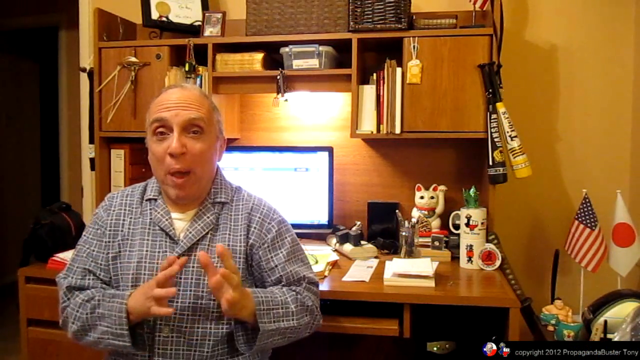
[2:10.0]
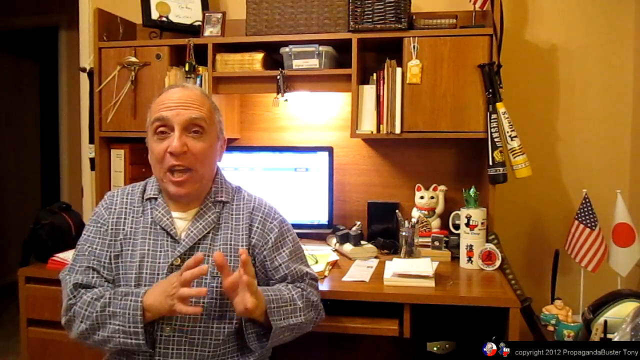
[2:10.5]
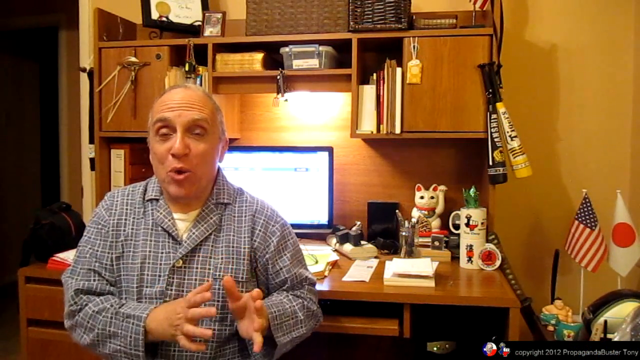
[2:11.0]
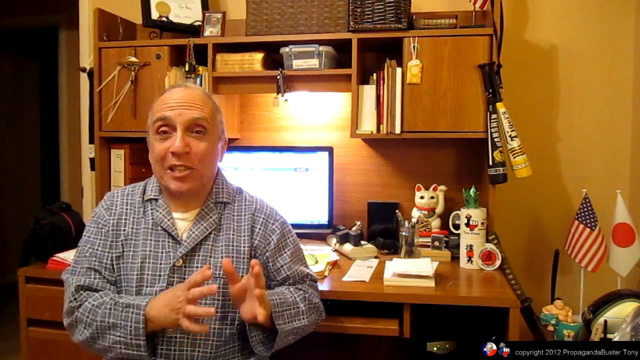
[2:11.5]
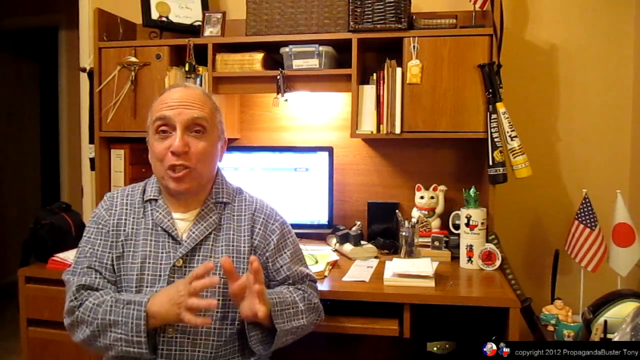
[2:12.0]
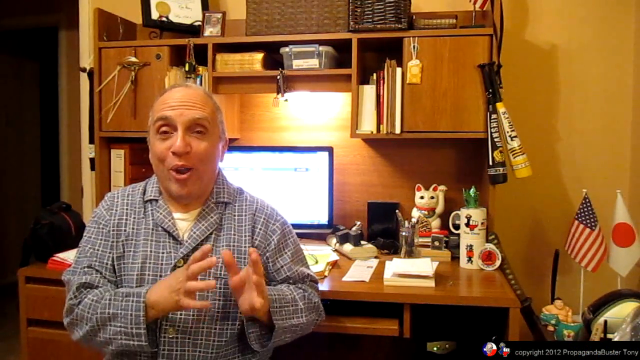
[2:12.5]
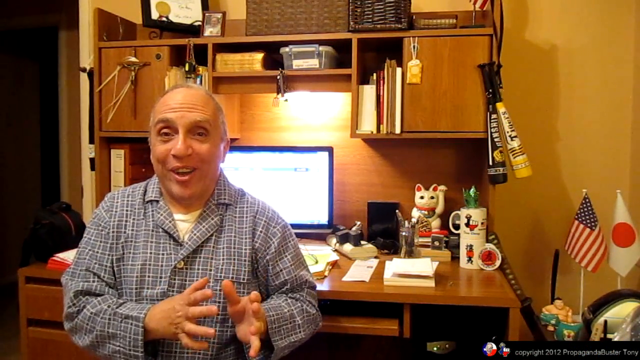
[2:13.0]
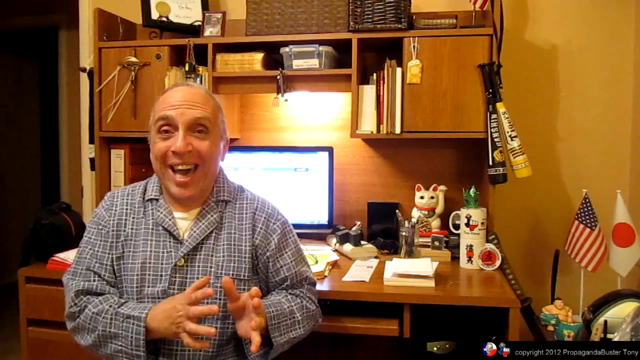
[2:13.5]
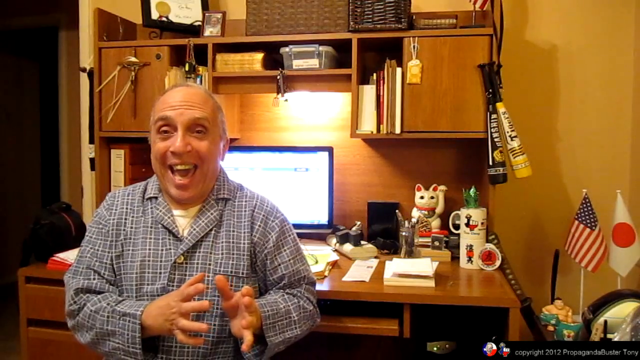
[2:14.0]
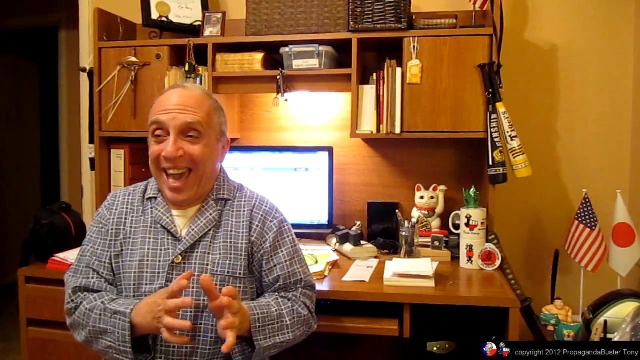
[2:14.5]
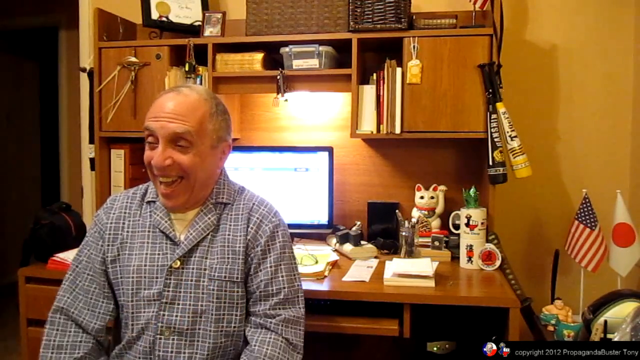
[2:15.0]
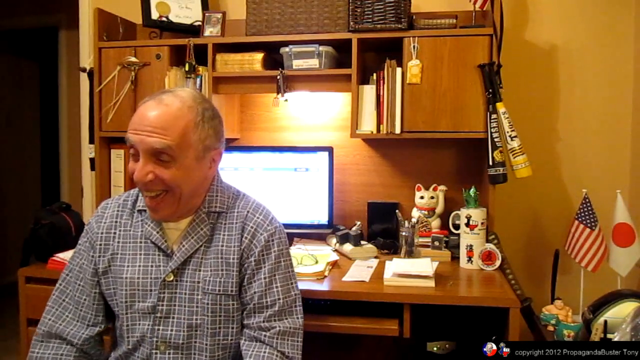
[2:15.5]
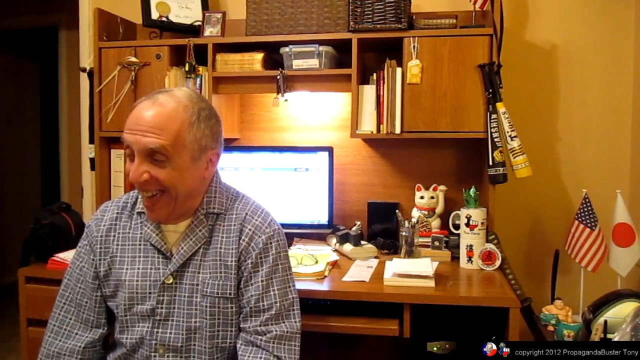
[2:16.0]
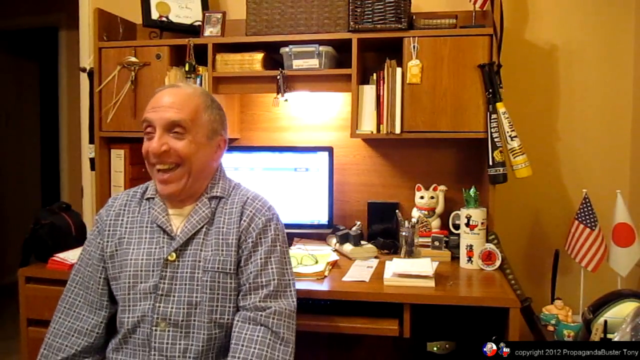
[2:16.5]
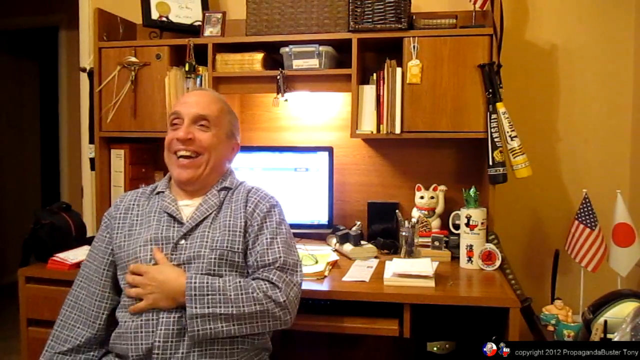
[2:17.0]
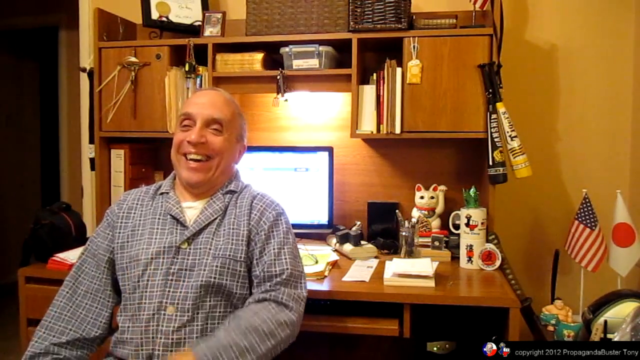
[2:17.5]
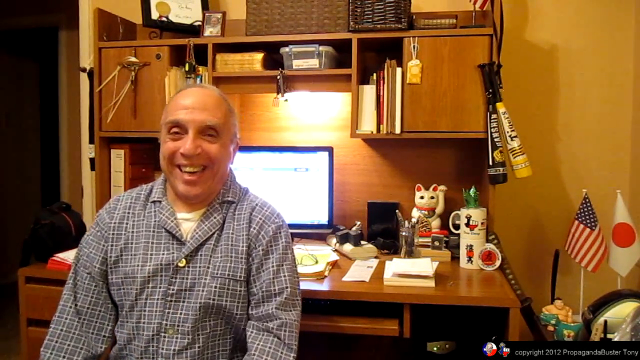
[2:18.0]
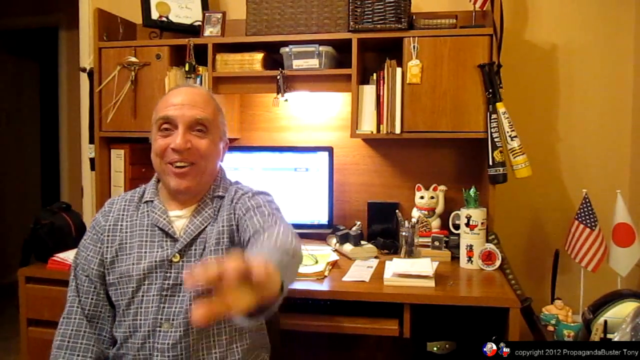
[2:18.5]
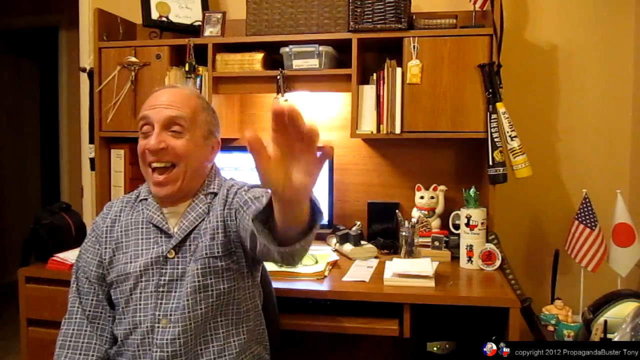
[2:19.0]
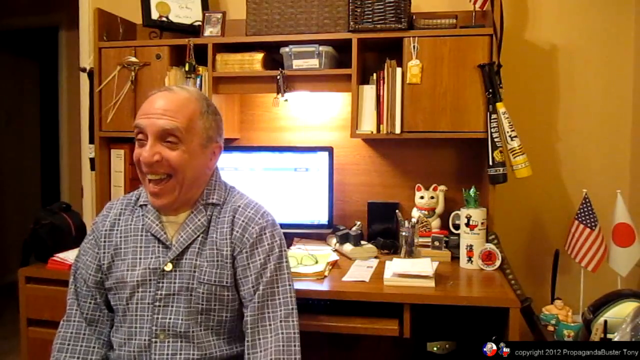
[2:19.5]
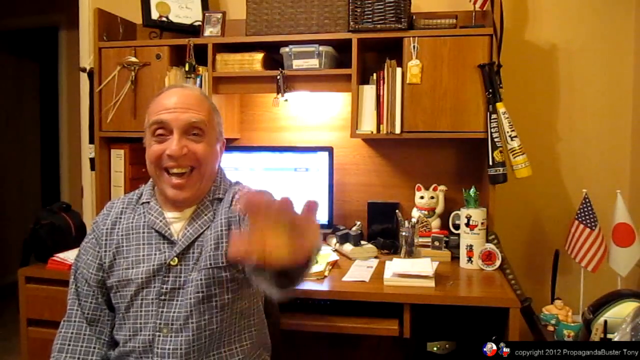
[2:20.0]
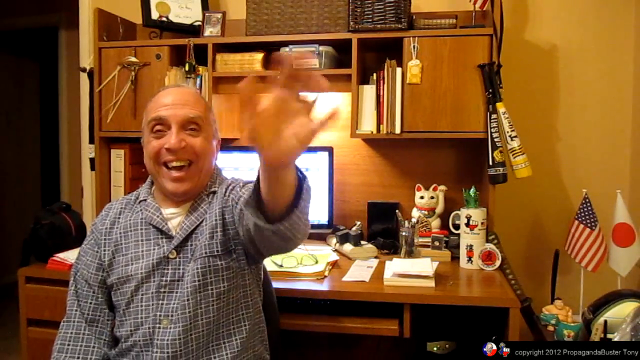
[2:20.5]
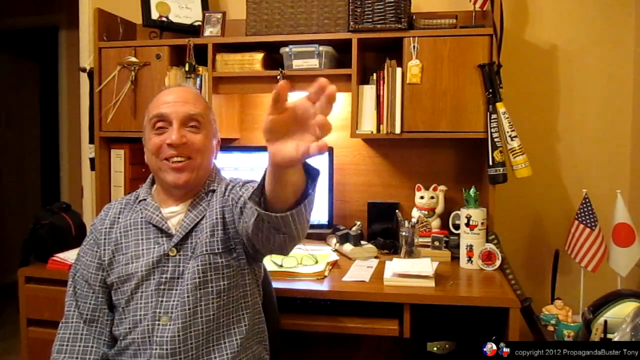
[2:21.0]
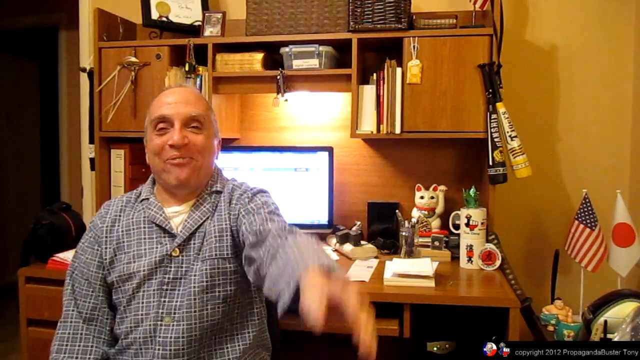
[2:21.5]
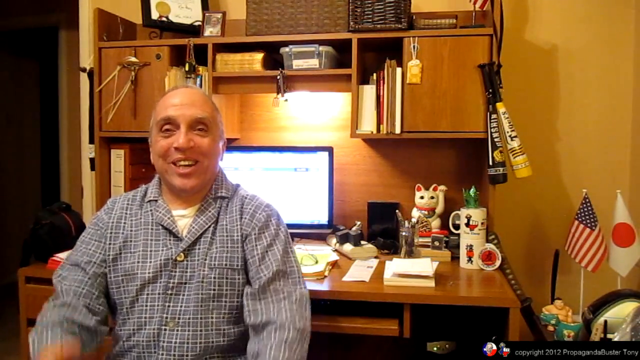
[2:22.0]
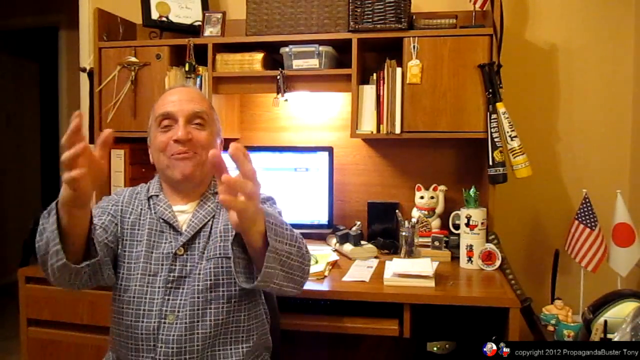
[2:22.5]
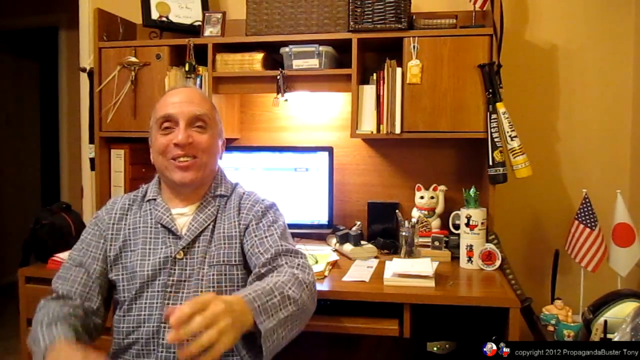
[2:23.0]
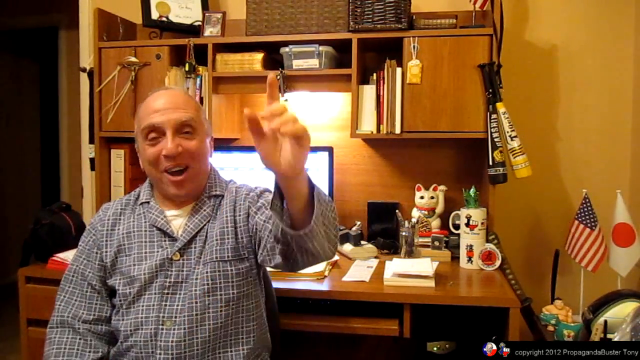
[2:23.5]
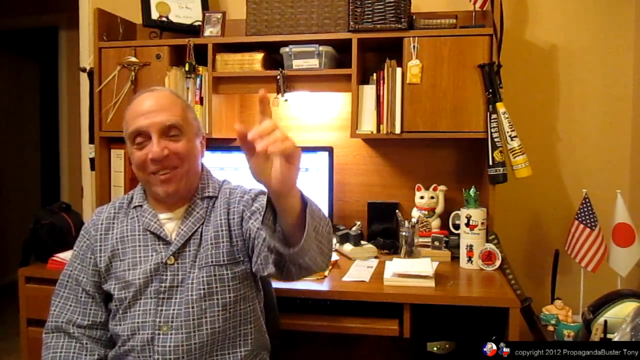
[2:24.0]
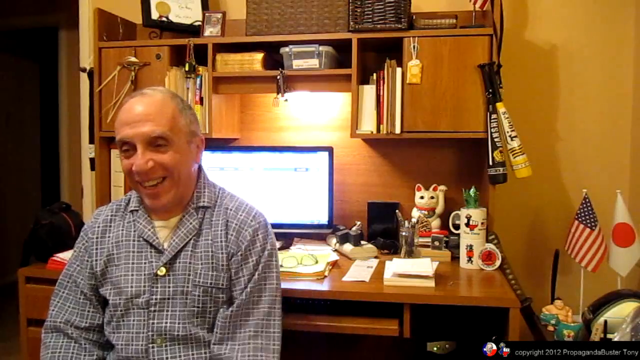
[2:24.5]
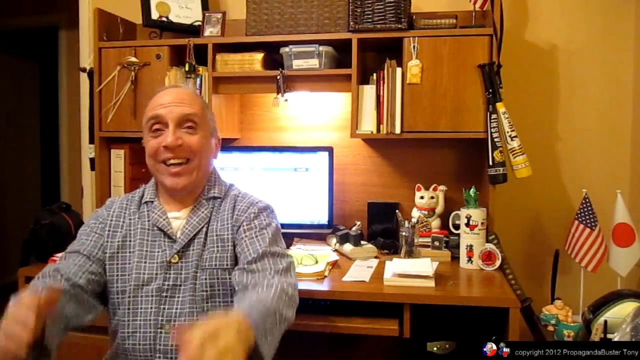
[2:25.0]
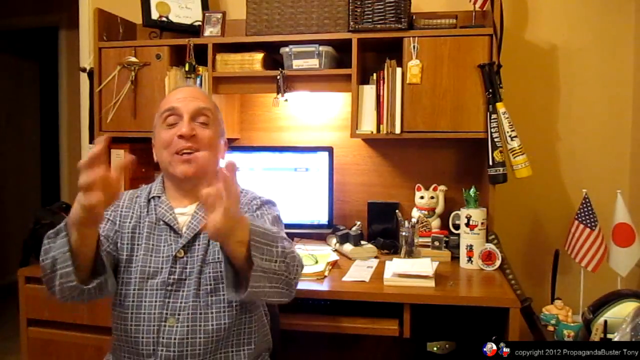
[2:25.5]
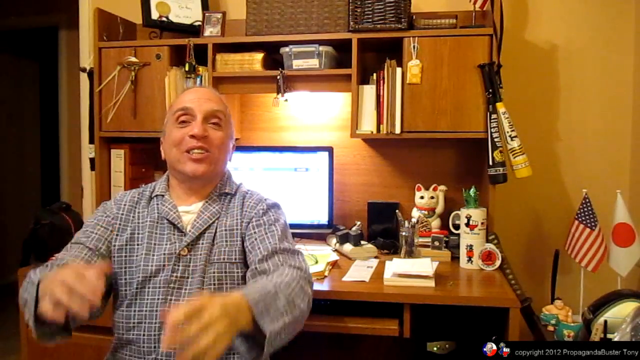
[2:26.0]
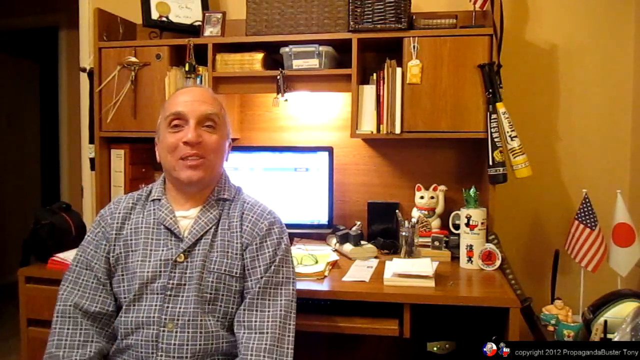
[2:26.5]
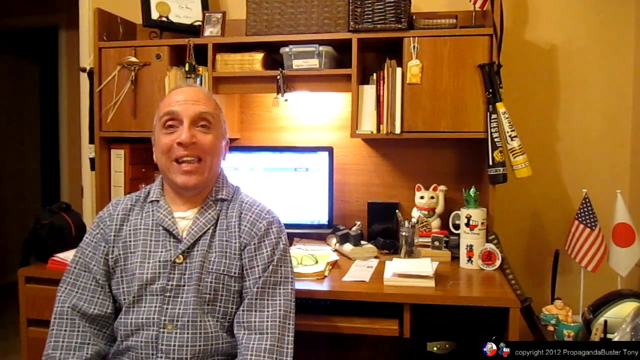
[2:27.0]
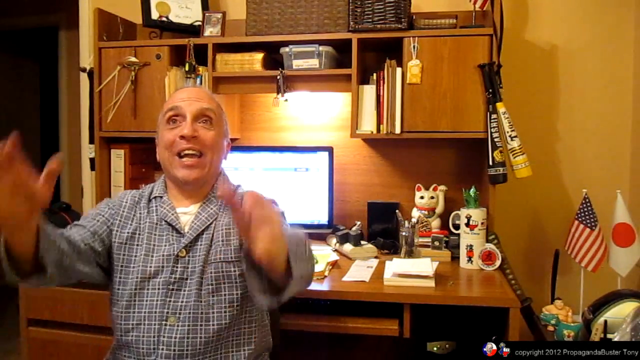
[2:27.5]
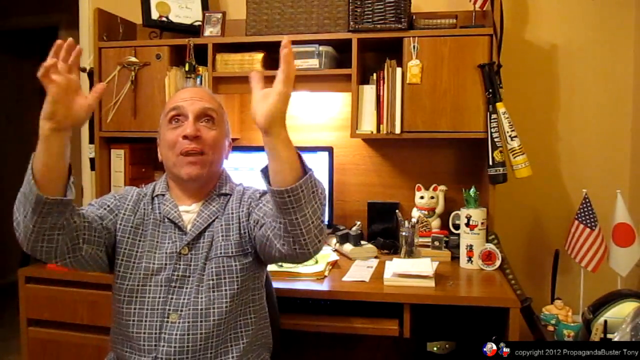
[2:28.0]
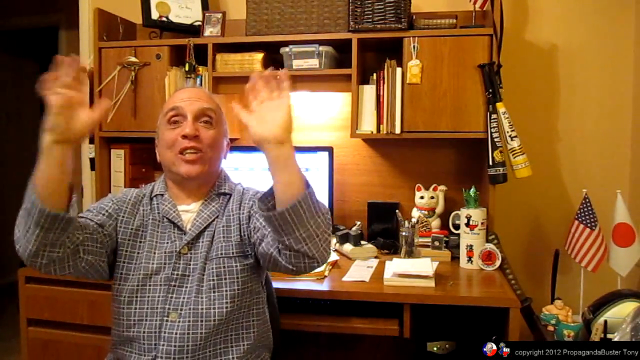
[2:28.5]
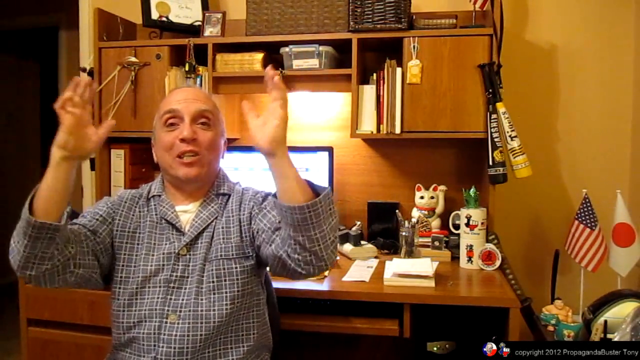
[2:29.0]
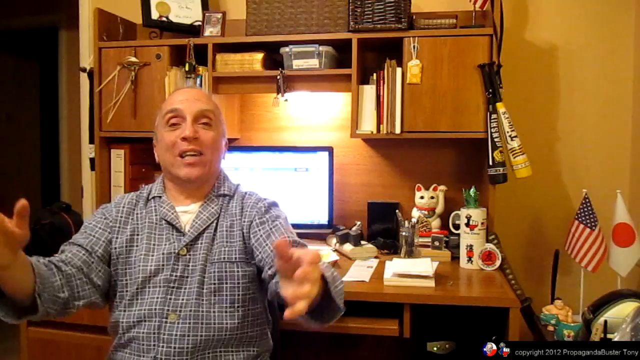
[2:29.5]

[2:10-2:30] The man continues making hand gestures back and forth, talking and laughing, almost hysterically at certain points, smiling into the camera, waving and opening his eyes widely. The scene does not change. The background still contains the U.S. flag, the Japanese flag, a Chinese-style waving cat, some mugs, books, different paintings, and a main computer monitor directly behind him.